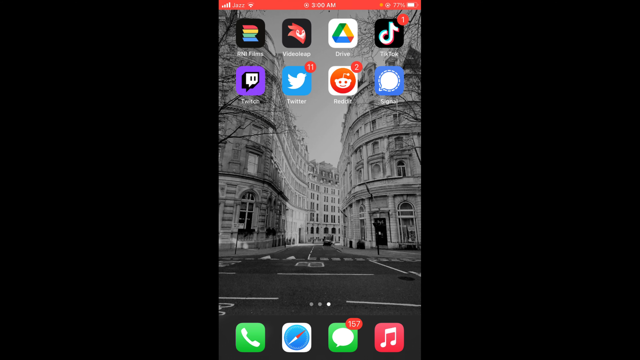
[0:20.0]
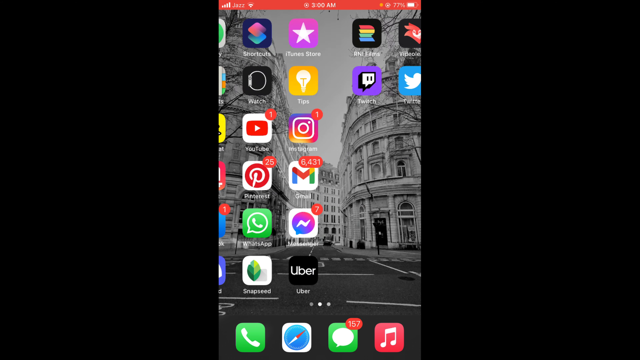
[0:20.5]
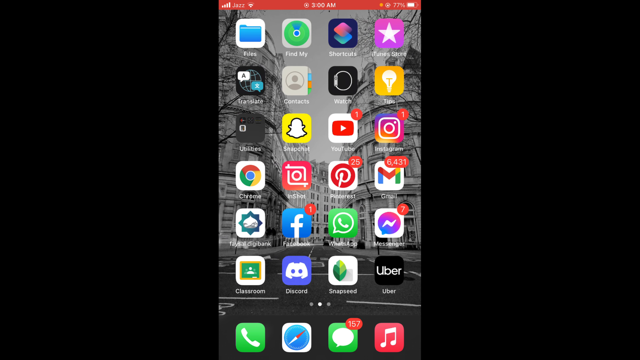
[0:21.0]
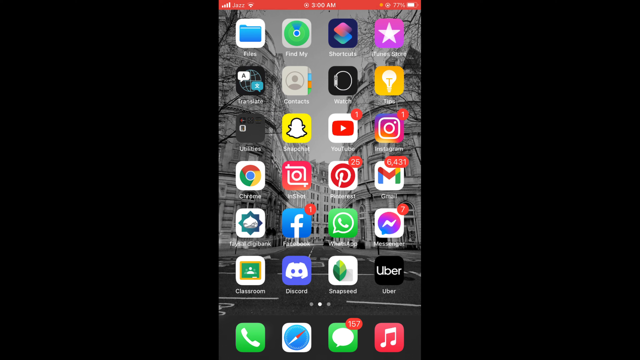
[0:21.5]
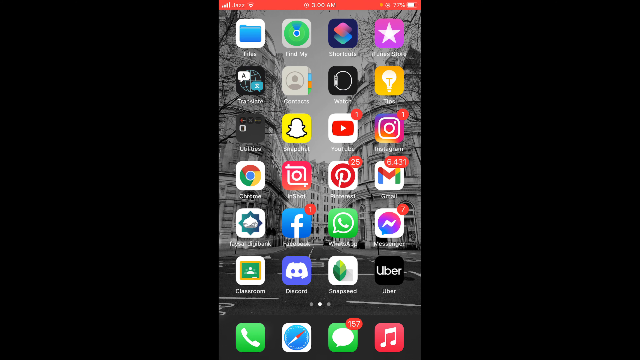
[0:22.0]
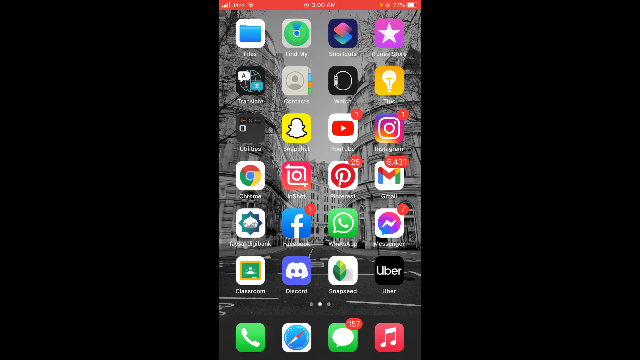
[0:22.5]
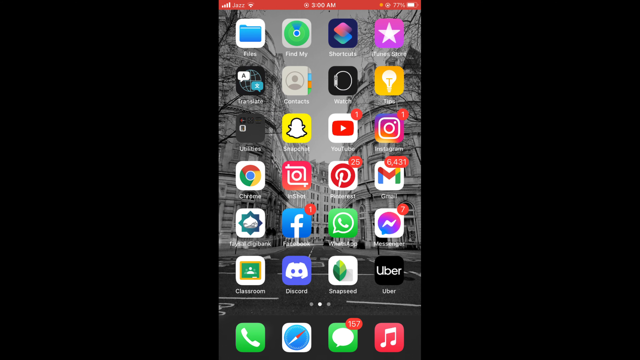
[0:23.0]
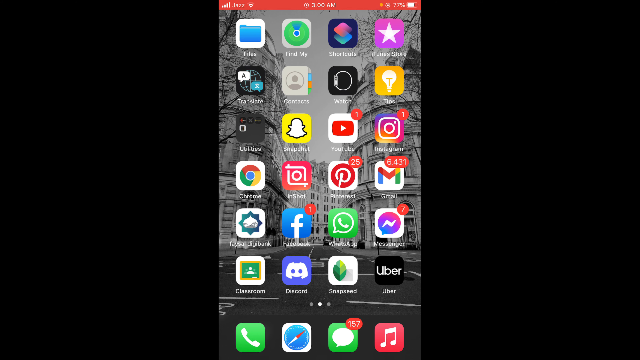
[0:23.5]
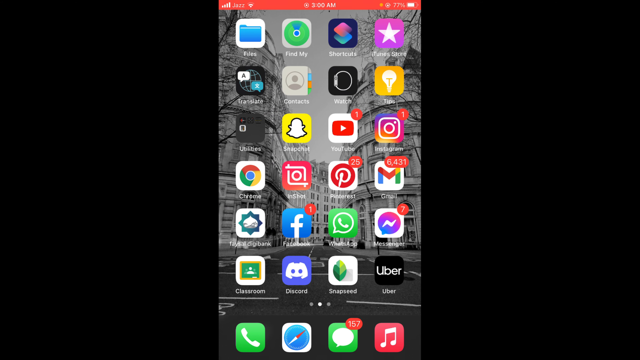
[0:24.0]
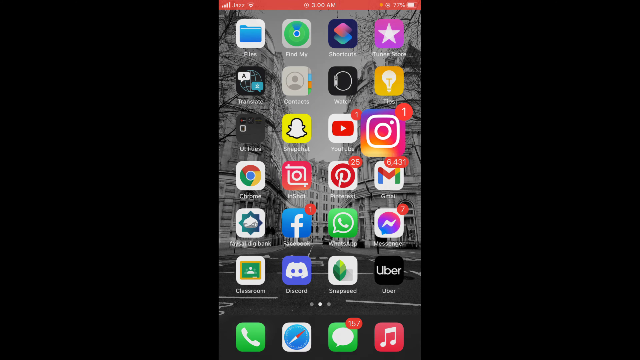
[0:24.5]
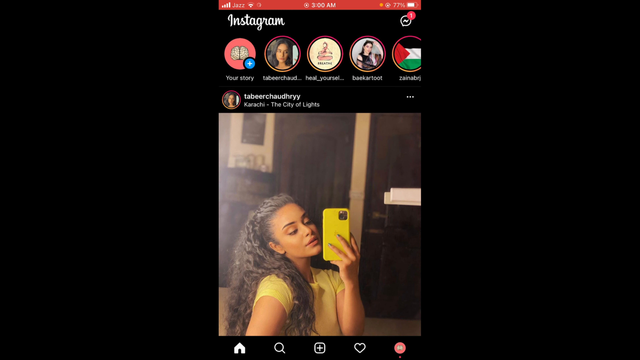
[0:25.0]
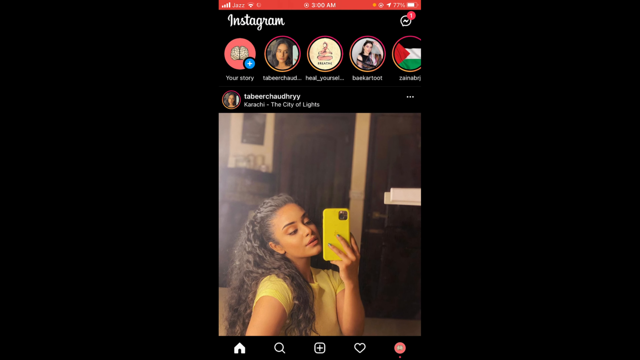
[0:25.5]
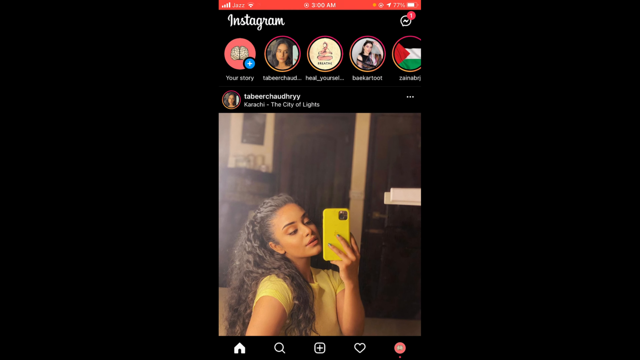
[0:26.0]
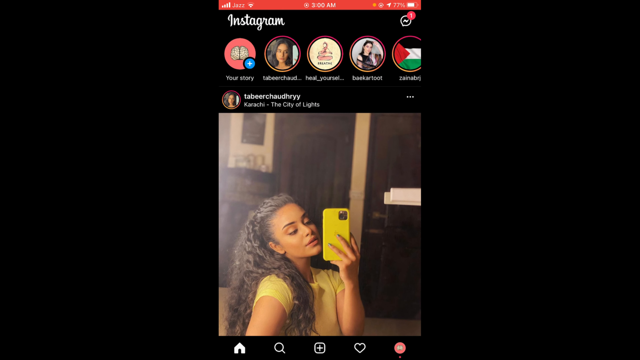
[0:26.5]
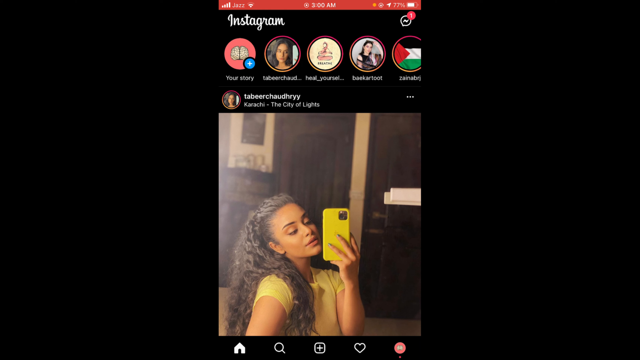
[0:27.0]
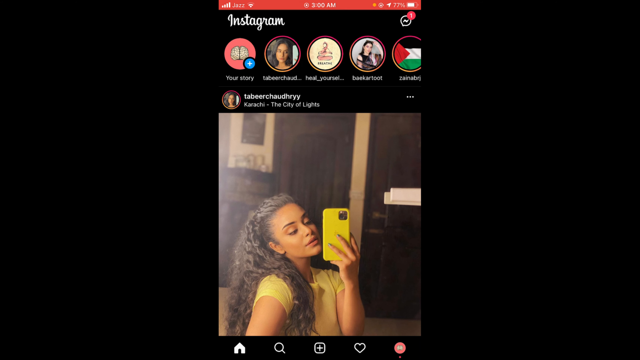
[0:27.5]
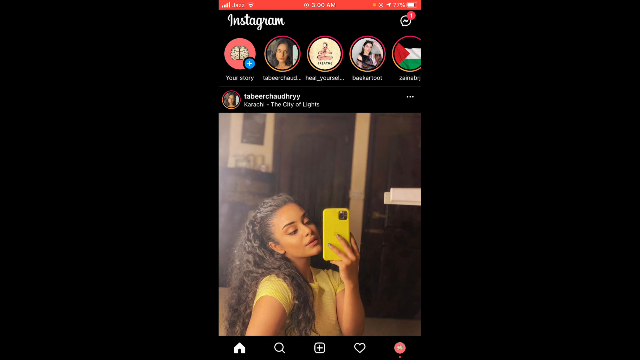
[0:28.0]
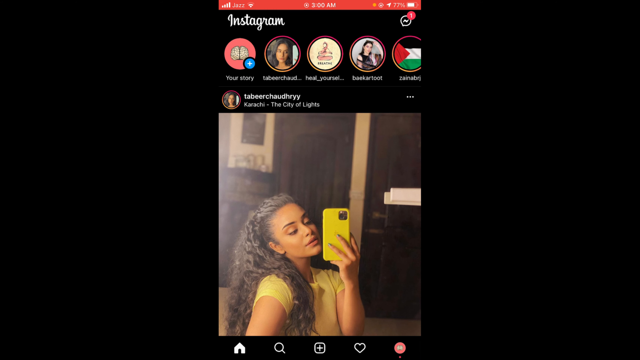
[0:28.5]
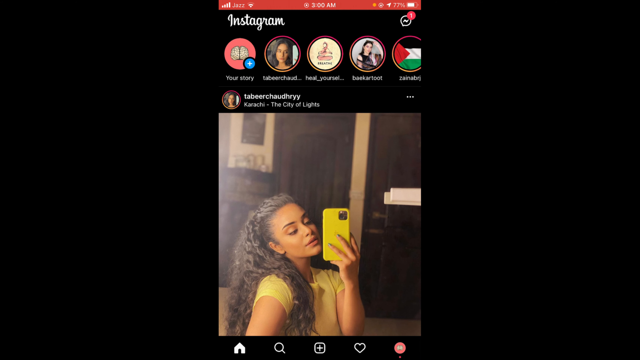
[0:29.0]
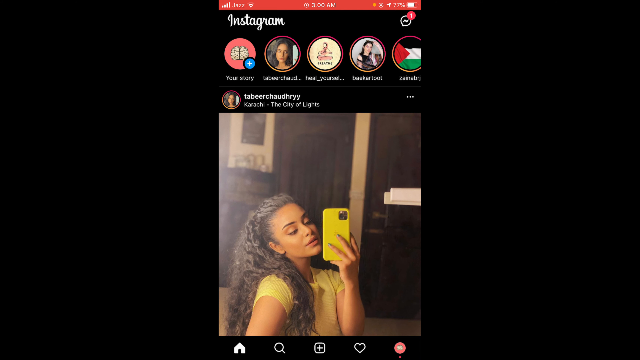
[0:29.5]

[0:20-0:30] A red bar is at the top of what looks like a phone screen that could be recording. There are eight icons at the top of the screen and four icons at the bottom. The screen then changes over to more icons, apparently swiped over. After this, Instagram appears to be opened, with some stories at the top. The first picture shows a young lady who looks like she could possibly be Hispanic; she is holding a yellow phone and has long curly hair that is pulled back.